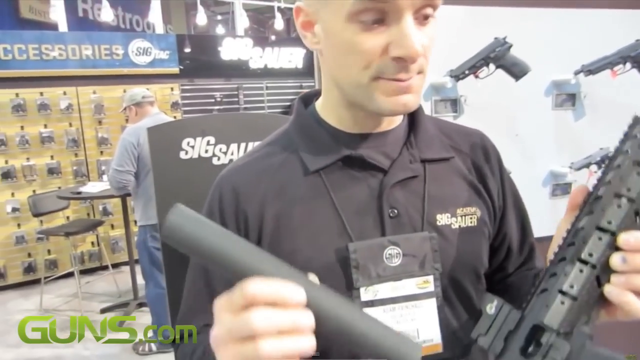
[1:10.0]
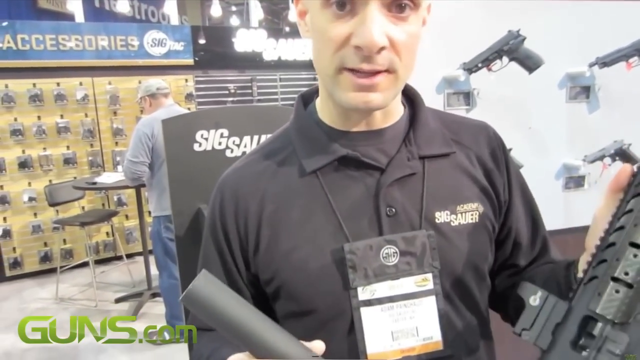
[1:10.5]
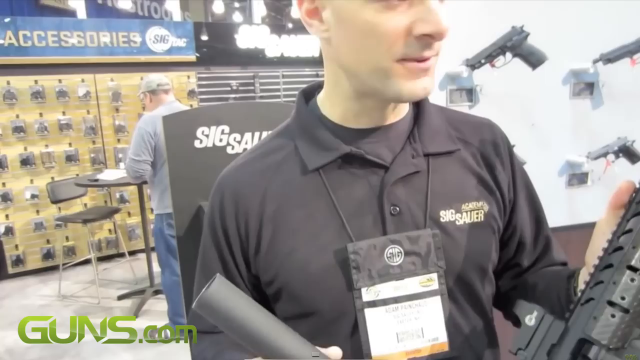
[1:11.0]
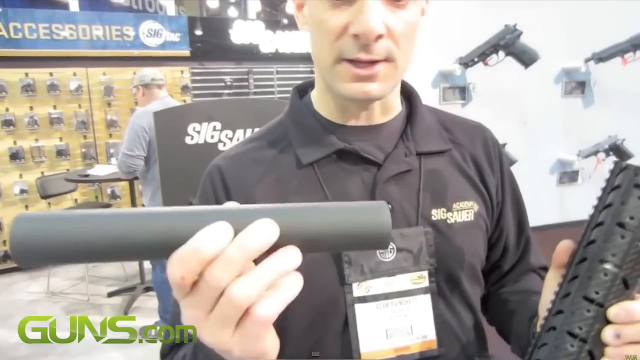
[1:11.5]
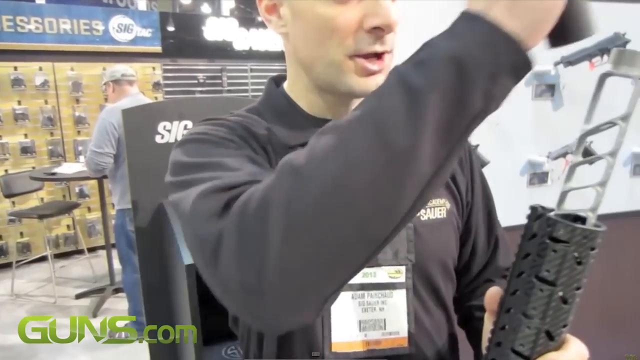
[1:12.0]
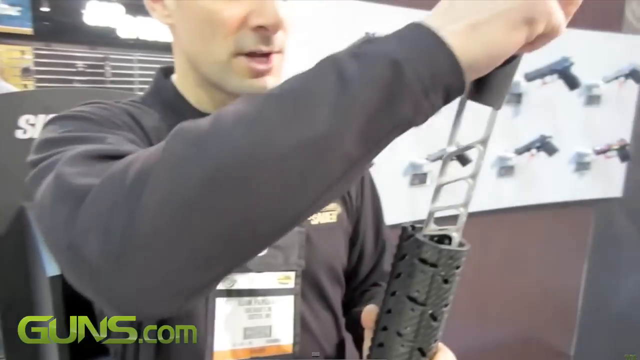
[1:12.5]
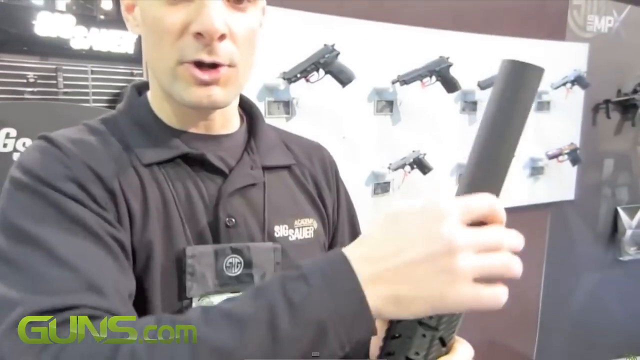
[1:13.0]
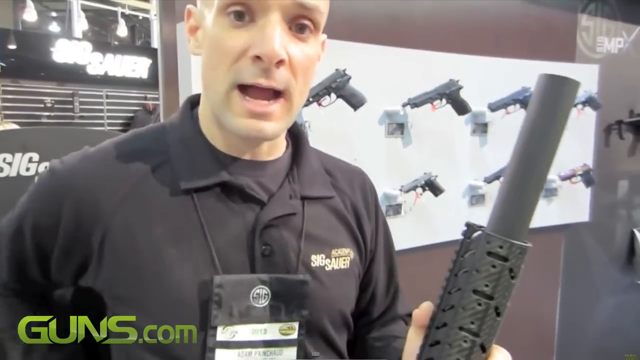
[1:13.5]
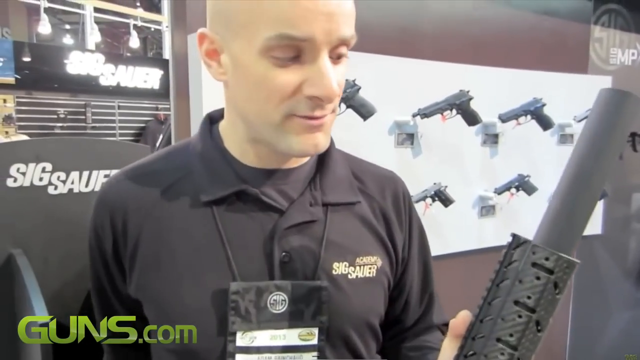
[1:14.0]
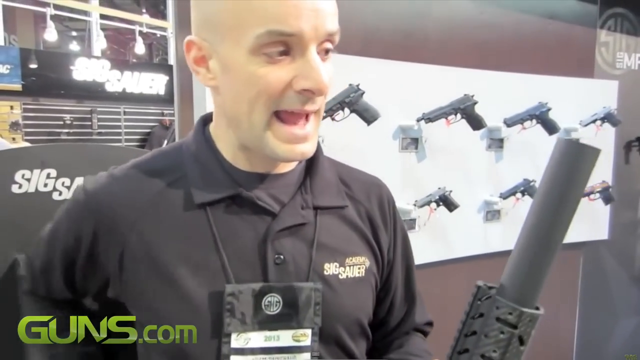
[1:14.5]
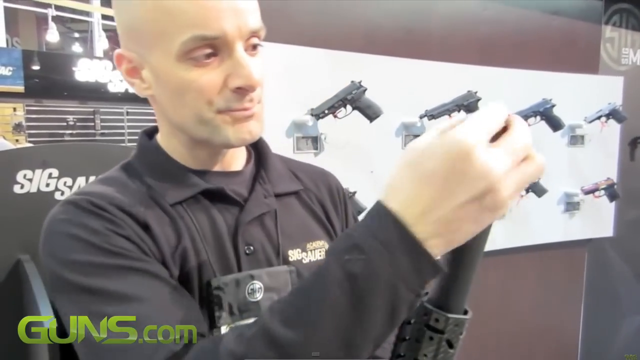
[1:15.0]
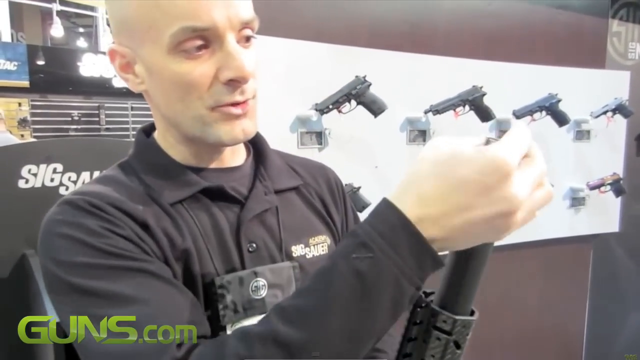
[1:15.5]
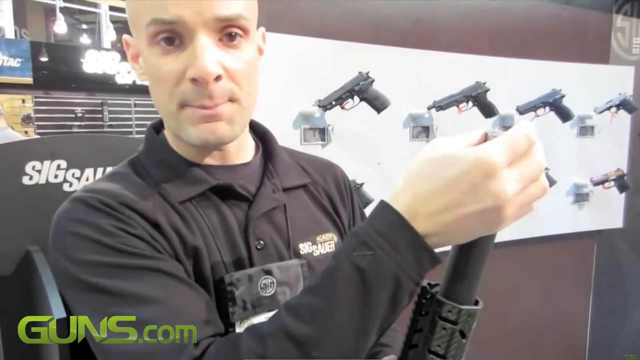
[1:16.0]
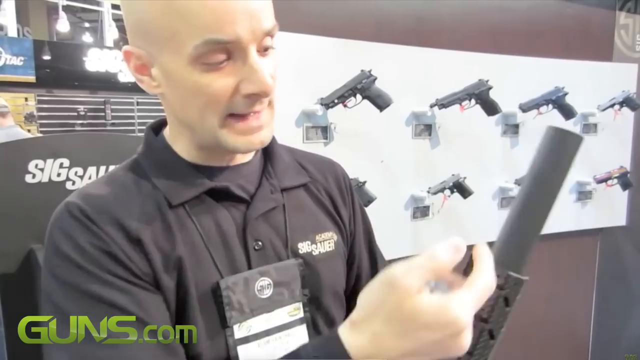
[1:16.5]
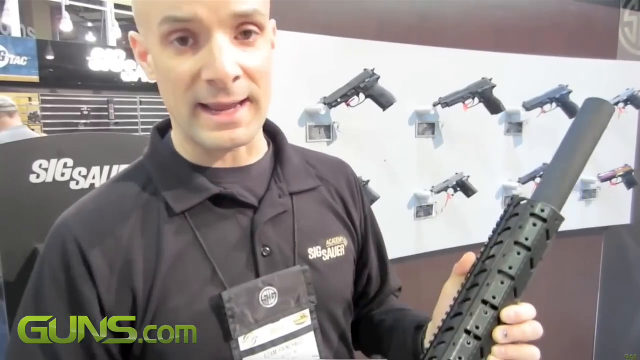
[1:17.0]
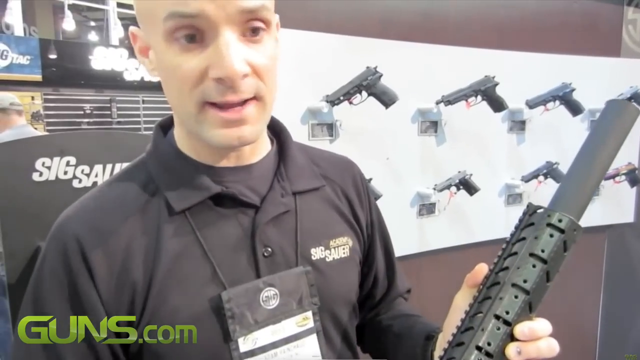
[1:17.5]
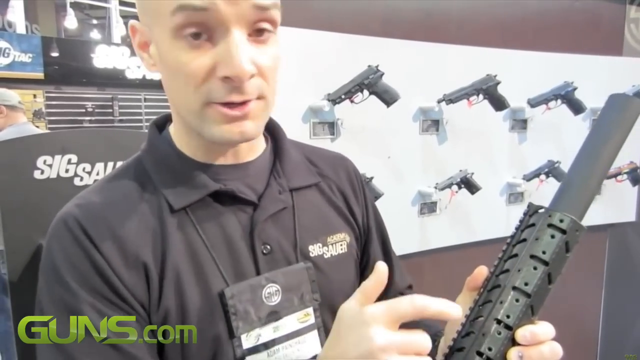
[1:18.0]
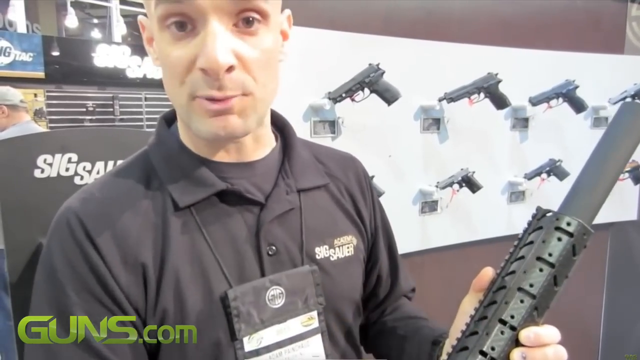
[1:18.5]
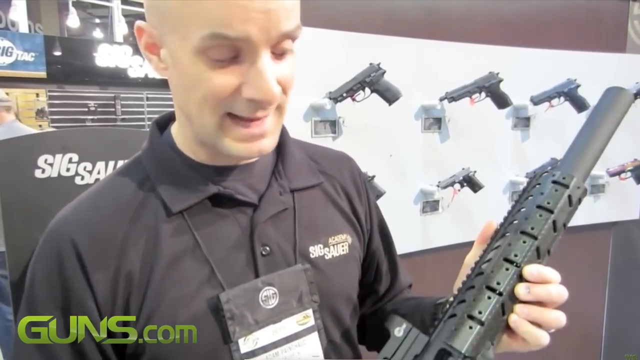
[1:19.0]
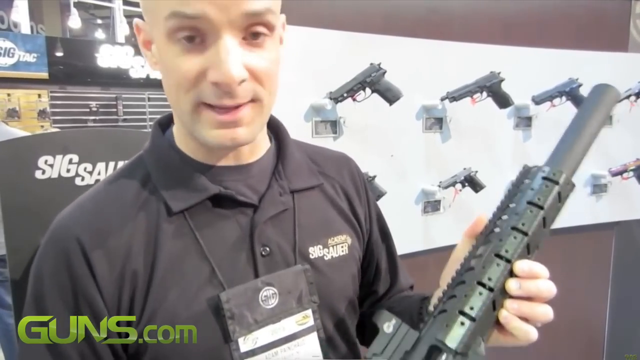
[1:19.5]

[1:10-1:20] Adam Painchaud is in the gun store, seen from about the stomach to almost the top of his head; the very top of his head is cut off, but he is bald. He holds a weapon in his left hand with the barrel face up; the whole weapon is not visible, only the barrel. While talking, he reaches over with his right hand holding a tube, probably about 12 inches long, and places it over the top of the weapon. The end of the barrel has a kind of open-topped metallic structure, and he slides the tube, apparently a silencer, over it. He then reaches into his back pocket and places a little plug on top of it, then pulls the plug out again. He apparently is demonstrating how to put a silencer on the weapon. He wears a charcoal gray, sort of polo shirt with an open collar, with "Sig Sauer" on the left breast; the same name is on a sign behind his right shoulder. For most of this portion he talks very fast and demonstrates, looking either at the camera or at the weapon. In the background, a man with his back to the camera stands at a small, short circular table looking at some paperwork.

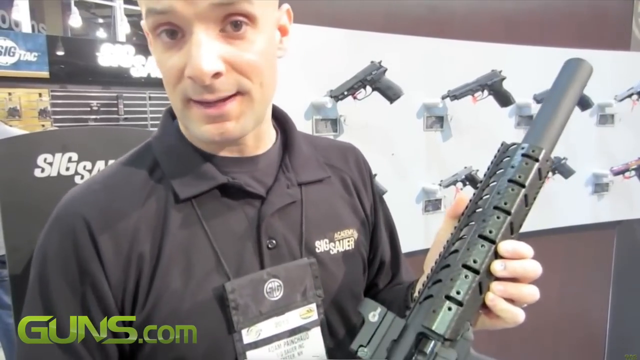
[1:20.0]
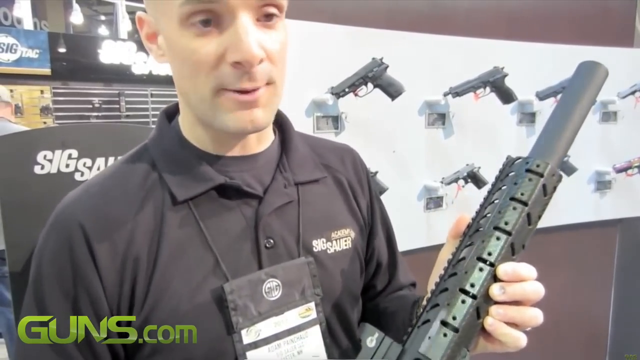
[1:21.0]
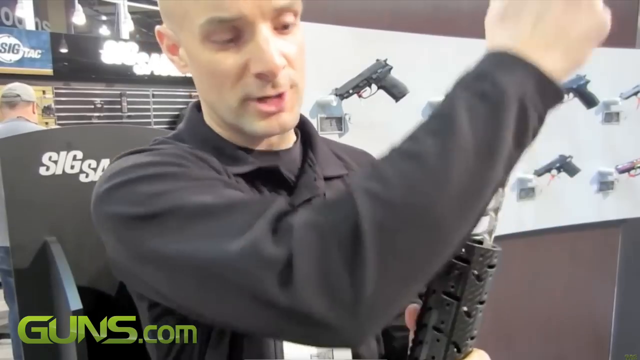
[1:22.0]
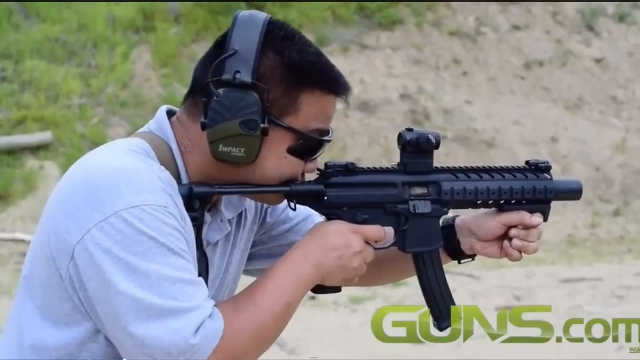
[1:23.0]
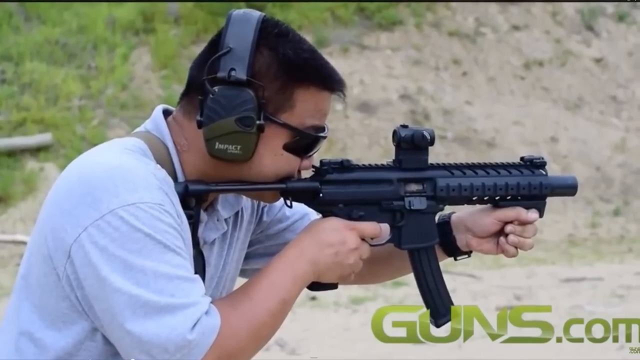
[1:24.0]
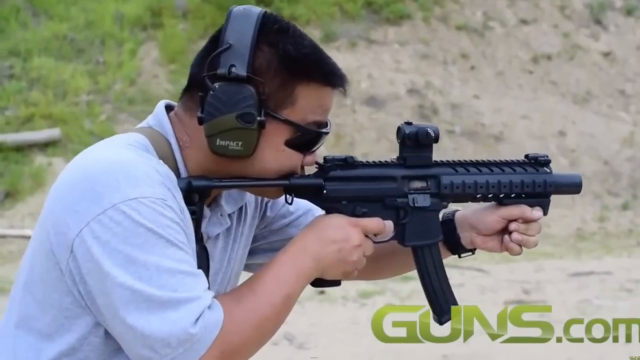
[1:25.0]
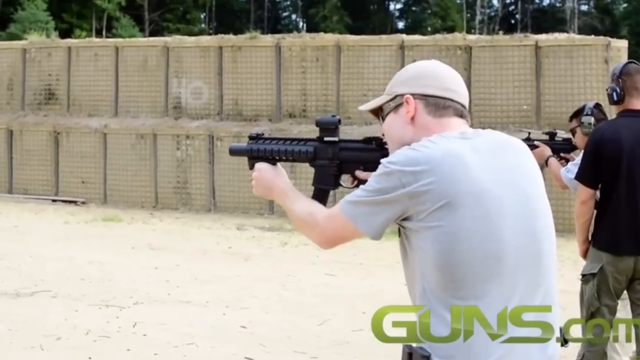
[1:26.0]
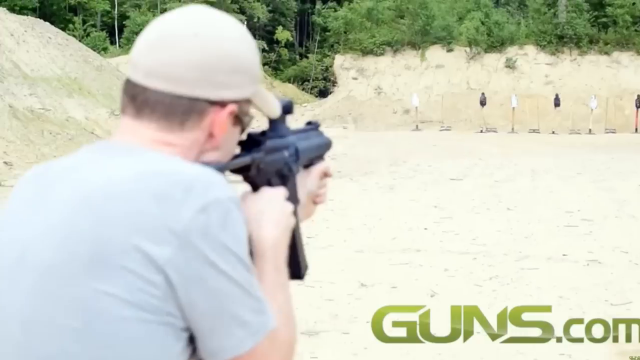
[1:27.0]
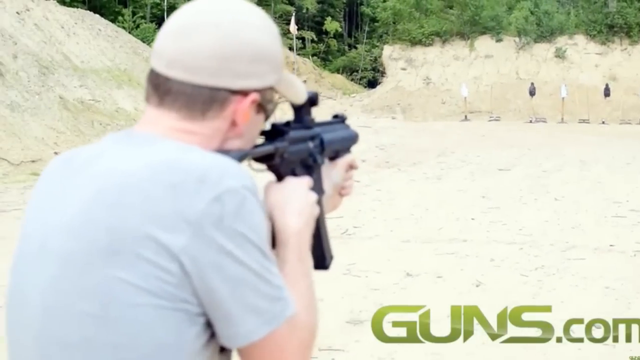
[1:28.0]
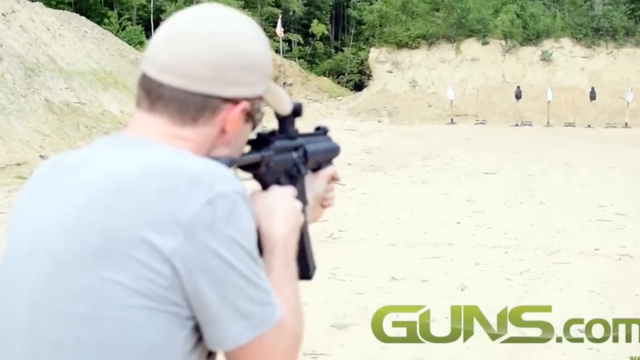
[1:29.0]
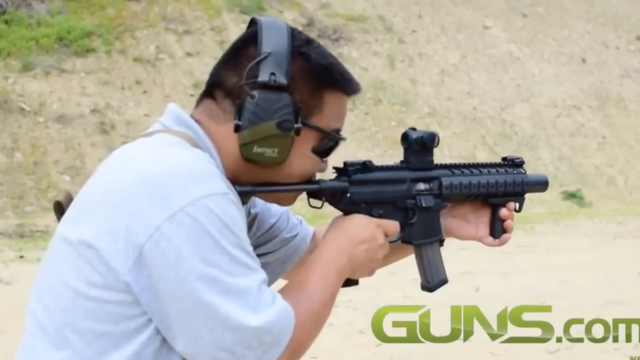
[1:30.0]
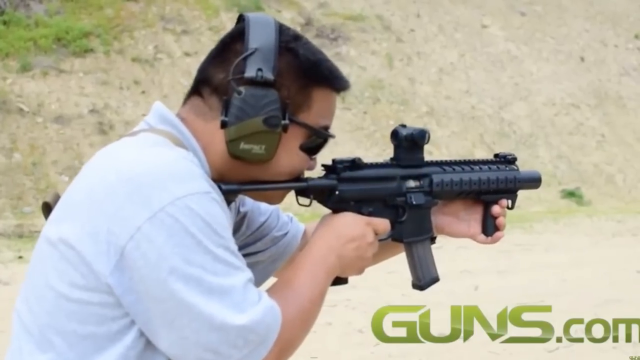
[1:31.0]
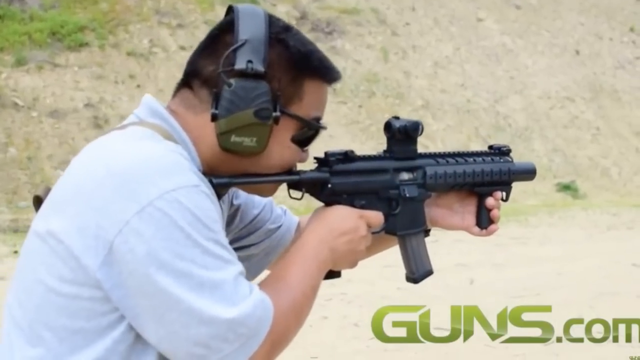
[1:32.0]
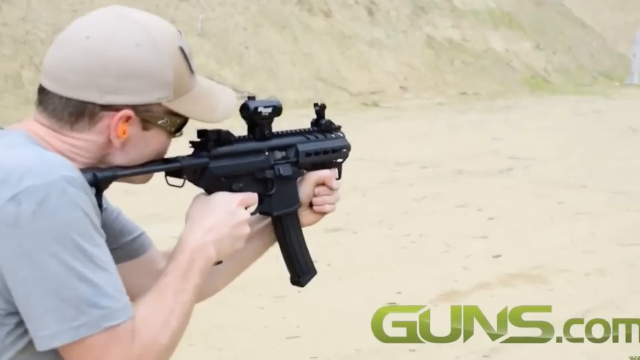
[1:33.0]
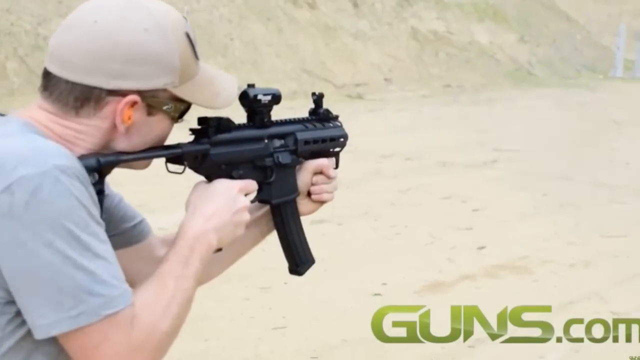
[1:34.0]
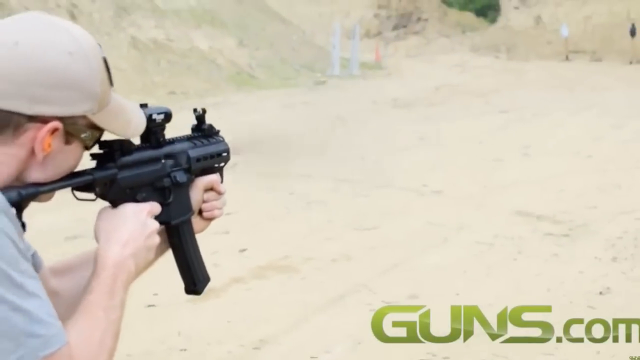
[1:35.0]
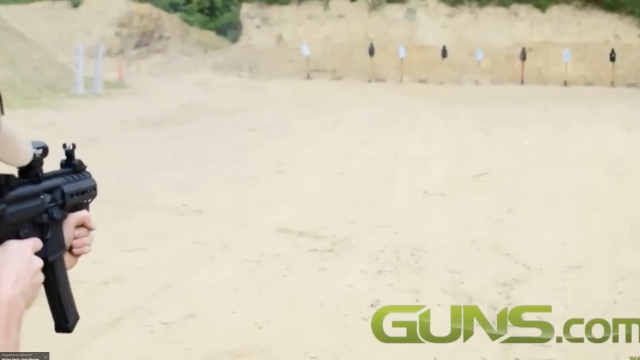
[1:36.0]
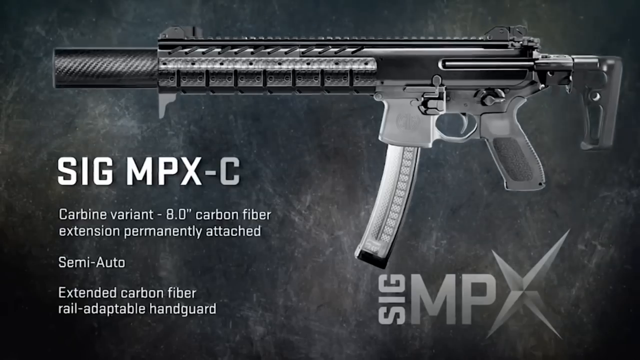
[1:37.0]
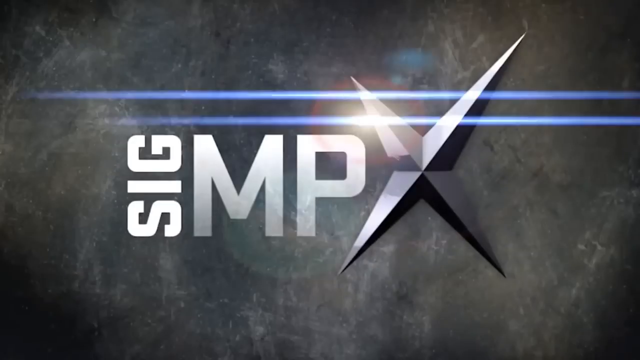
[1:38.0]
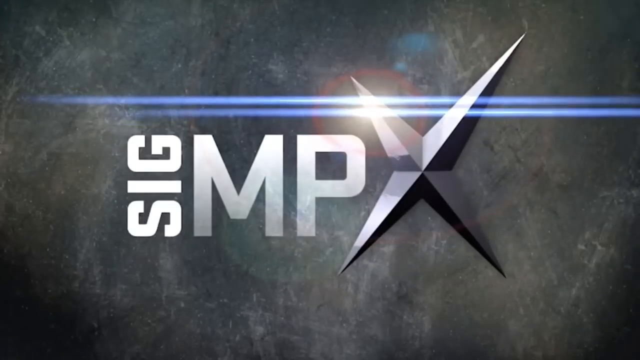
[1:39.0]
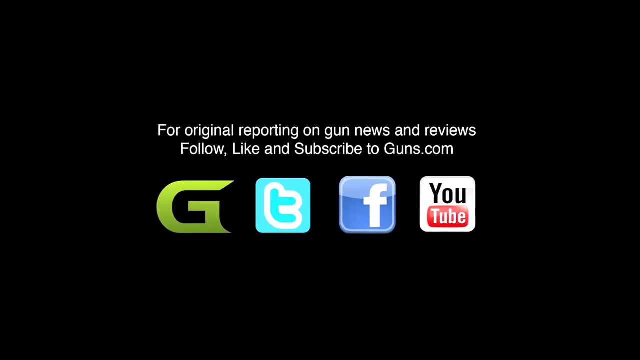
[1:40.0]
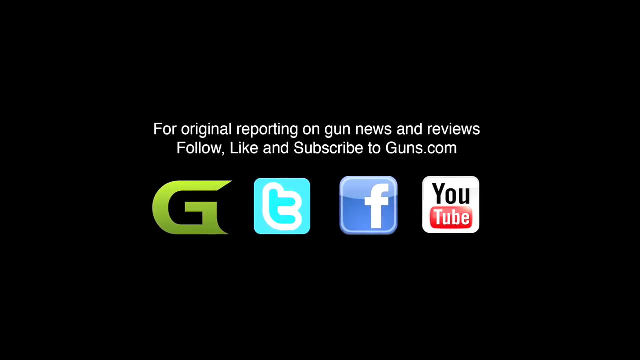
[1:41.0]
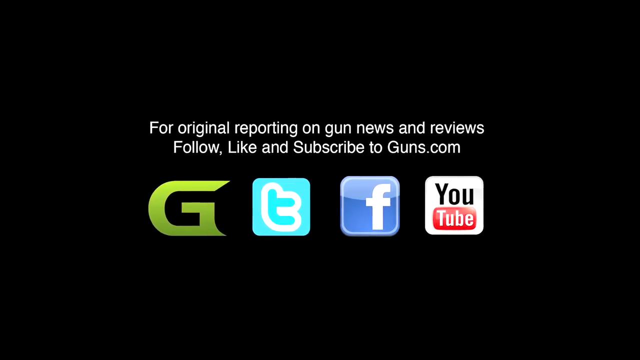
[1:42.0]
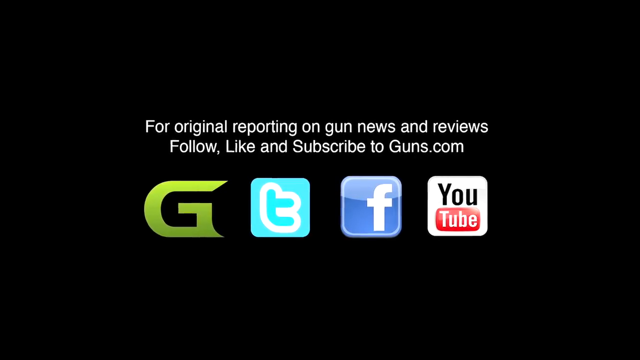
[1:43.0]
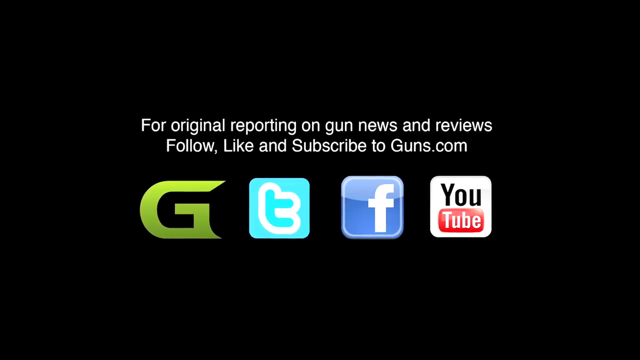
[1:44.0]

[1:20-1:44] Adam continues talking for a moment, then the video cuts to someone shooting. People hold one of these weapons with the right finger on the trigger and the left hand holding a little handle almost below the nozzle. They don't seem to have the silencer on, and they fire toward the right of the screen. They wear headphones and glasses and are seen only from mid-torso up, probably kneeling. Other shots show people firing in the opposite direction, with a couple of them on the right of the screen. Then a shot from behind shows someone in a tan baseball cap shooting one of these weapons. Far away in the upper right of the image are targets: what looks like a stone-colored wall with a couple of black targets on it and shrubbery growing out the top. The Guns.com logo is in the lower right corner. In the second half of these shots, the ground is visible: dirt in what looks like a very sandy, dirt-covered area rather than grass. They are outdoors. Next comes a digital screen with a kind of charcoal-colored stone background and the SIG MP logo on it. Horizontal blue lights appear at the top as though reflecting sunlight, converge, and flash. Then comes apparently the final screen, black with white text reading "For original reporting on gun news and reviews, follow, like, and subscribe to Guns.com". Below are four logos: the Guns.com 'G' on the left, followed by the Twitter, Facebook, and YouTube logos.